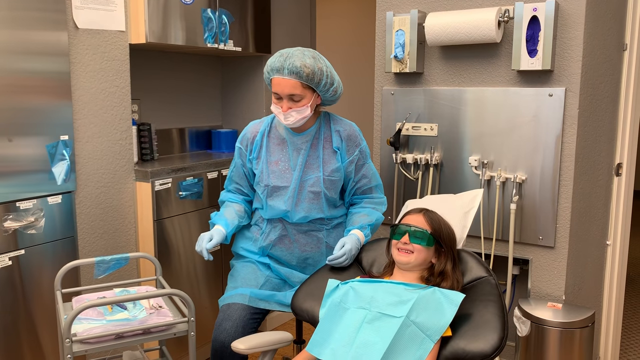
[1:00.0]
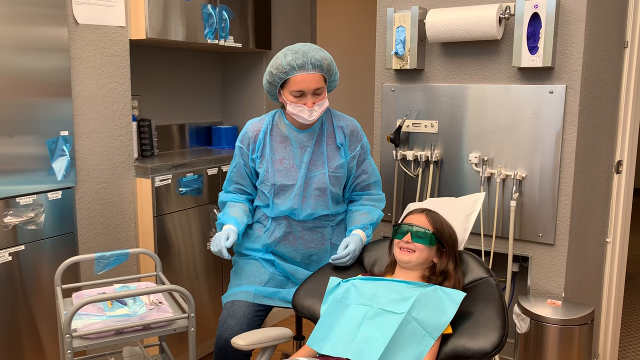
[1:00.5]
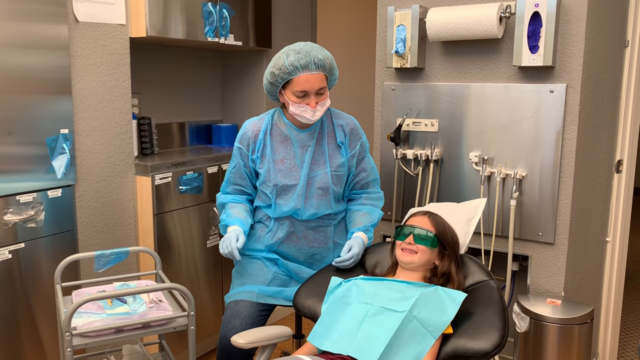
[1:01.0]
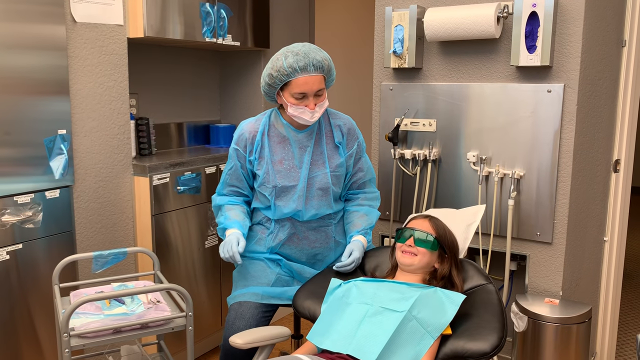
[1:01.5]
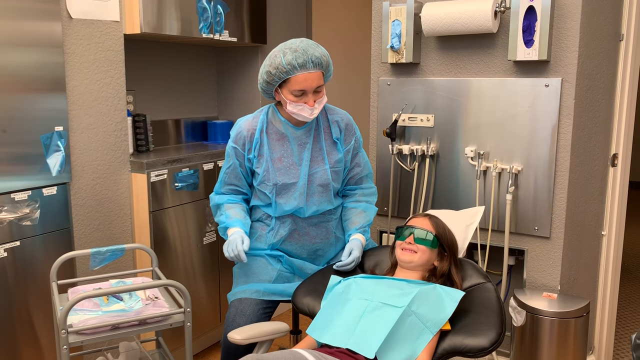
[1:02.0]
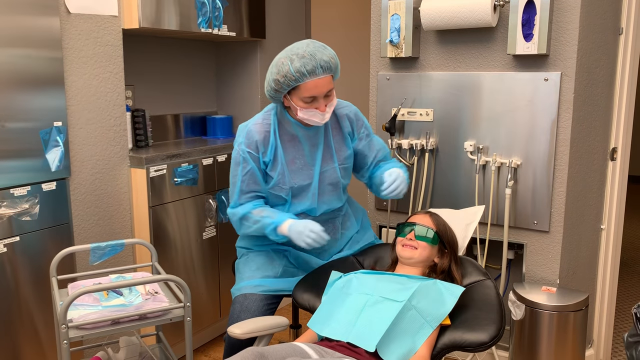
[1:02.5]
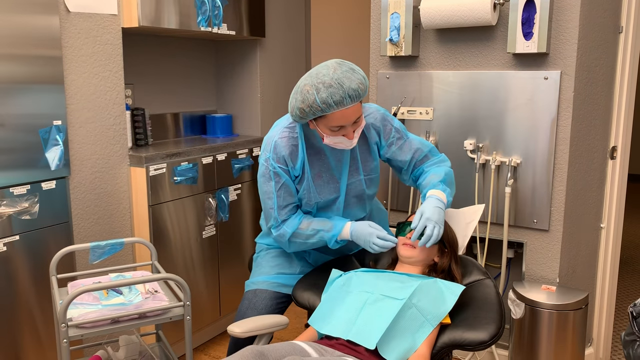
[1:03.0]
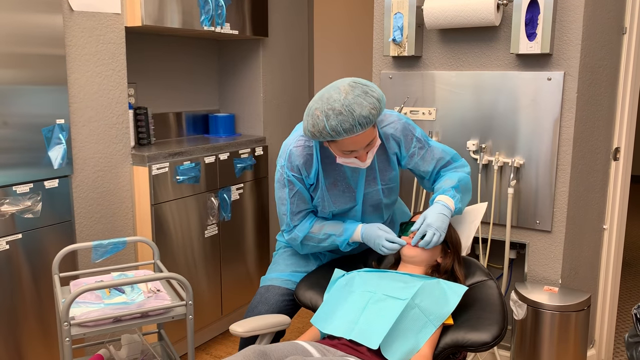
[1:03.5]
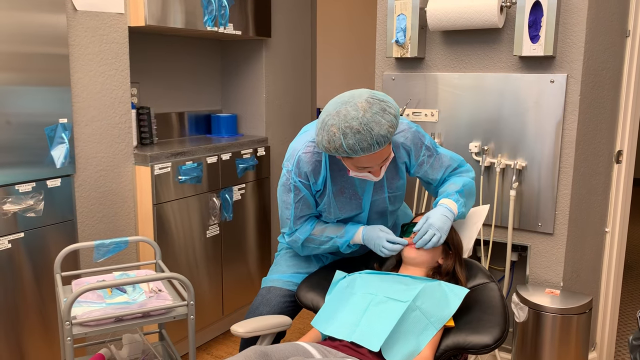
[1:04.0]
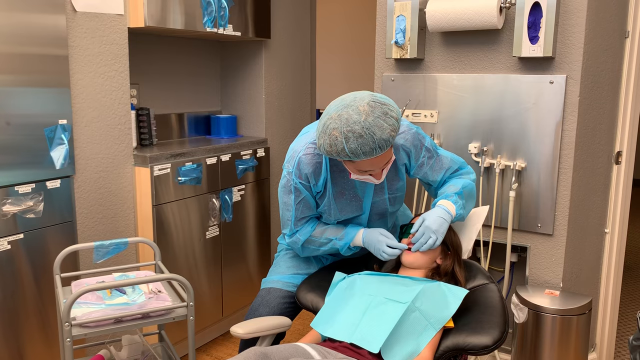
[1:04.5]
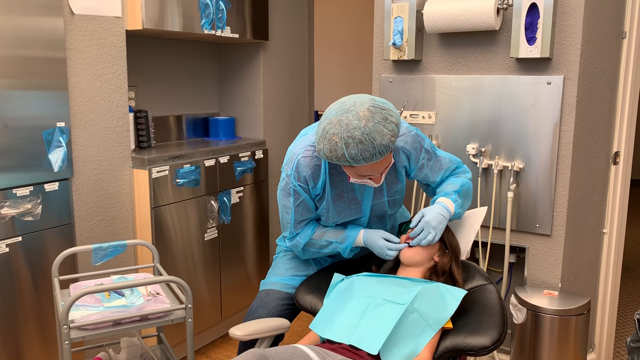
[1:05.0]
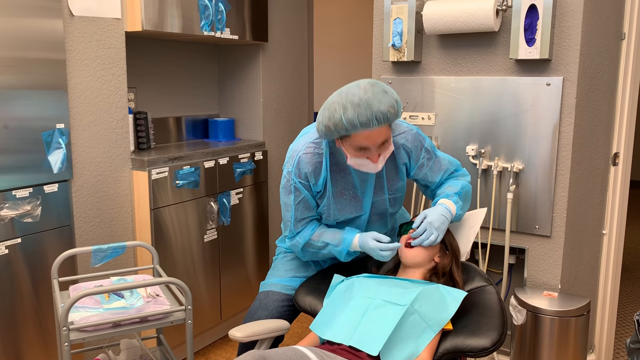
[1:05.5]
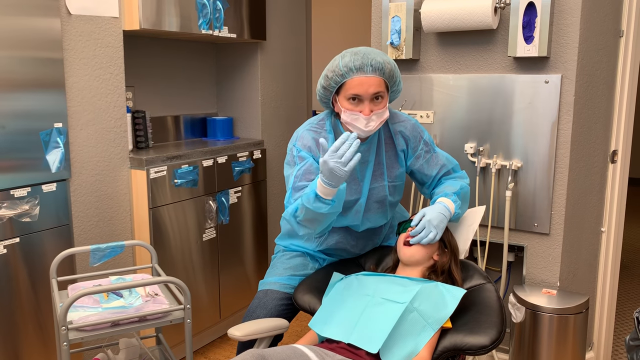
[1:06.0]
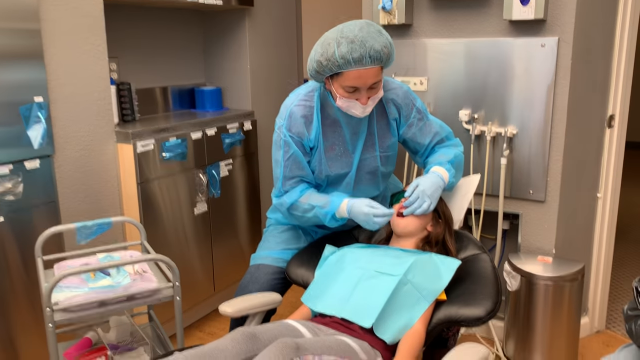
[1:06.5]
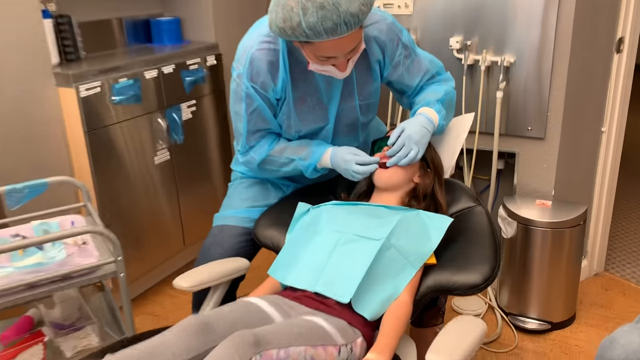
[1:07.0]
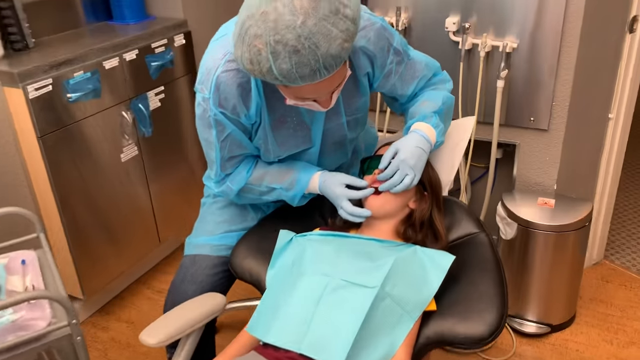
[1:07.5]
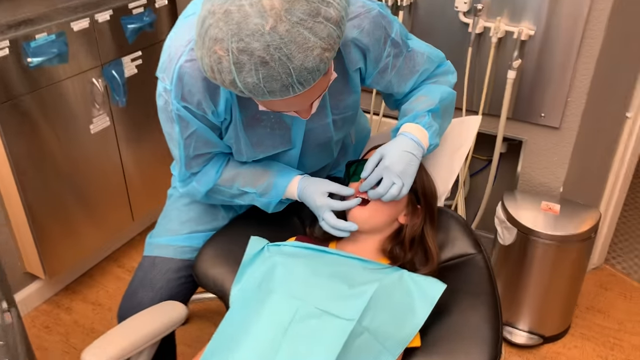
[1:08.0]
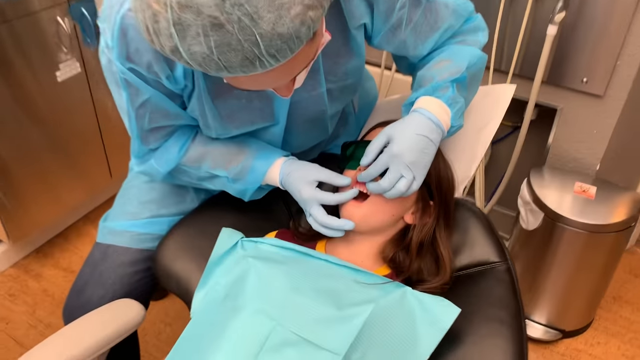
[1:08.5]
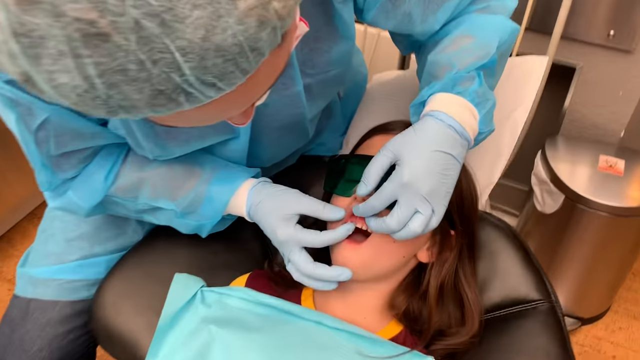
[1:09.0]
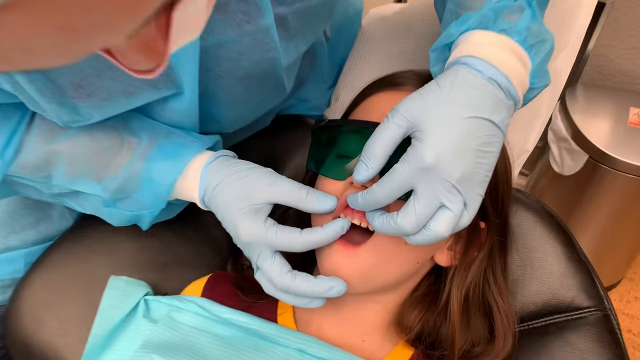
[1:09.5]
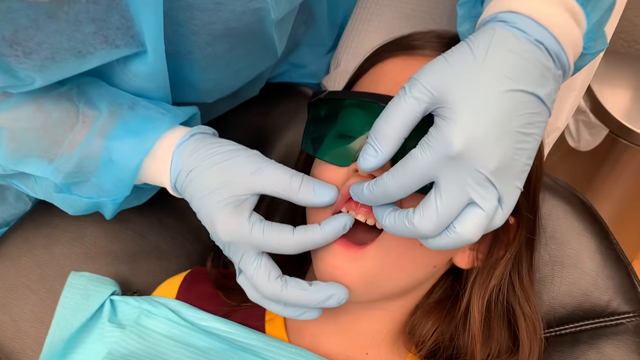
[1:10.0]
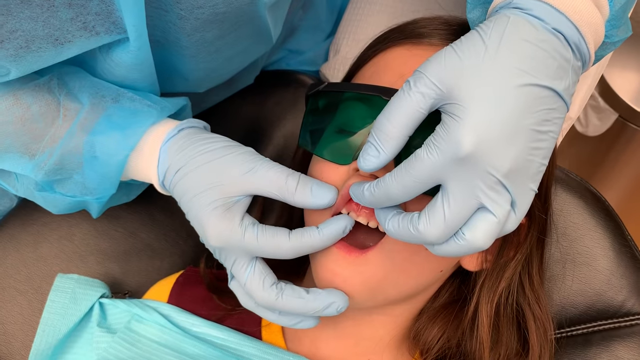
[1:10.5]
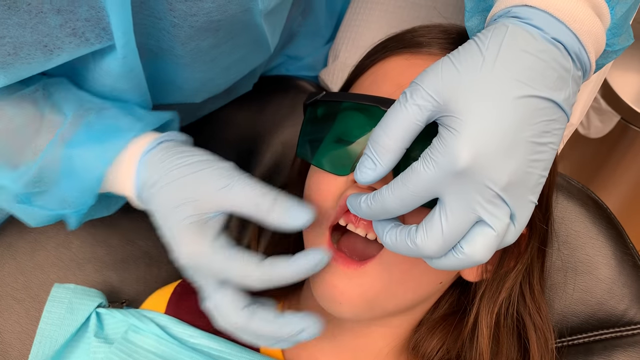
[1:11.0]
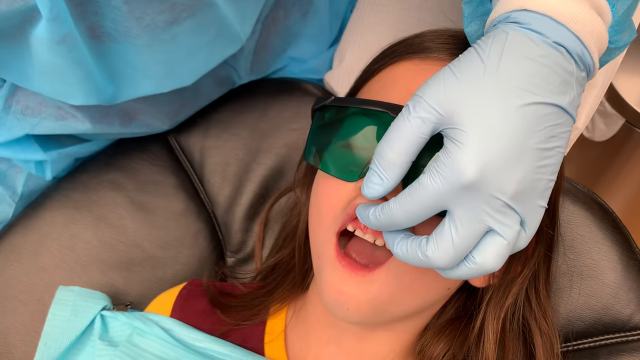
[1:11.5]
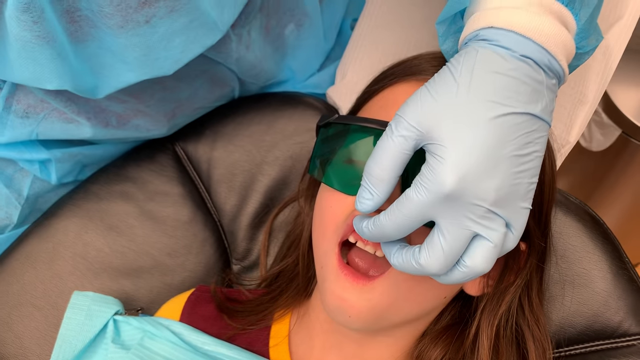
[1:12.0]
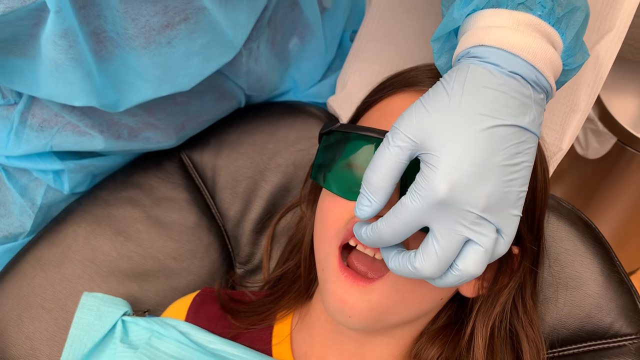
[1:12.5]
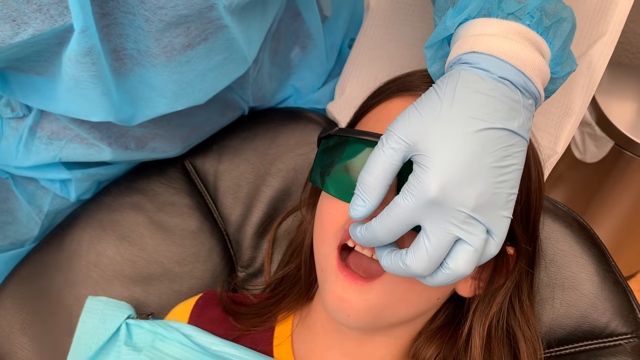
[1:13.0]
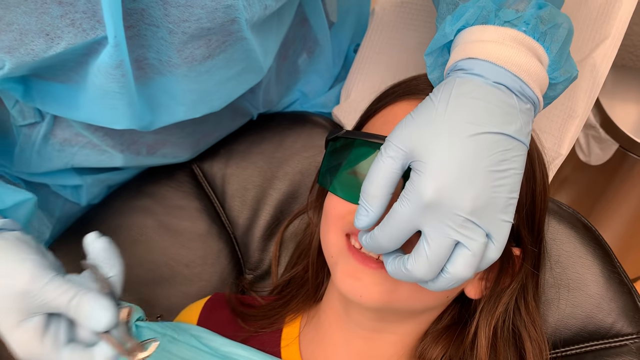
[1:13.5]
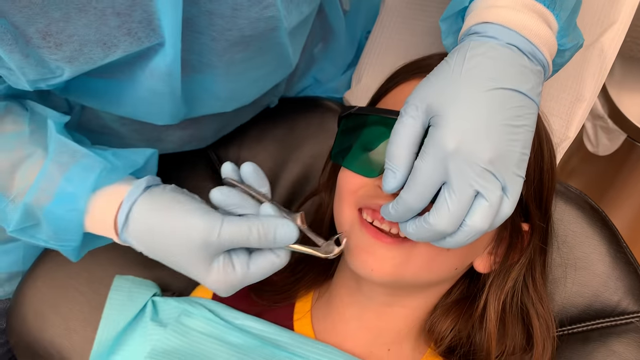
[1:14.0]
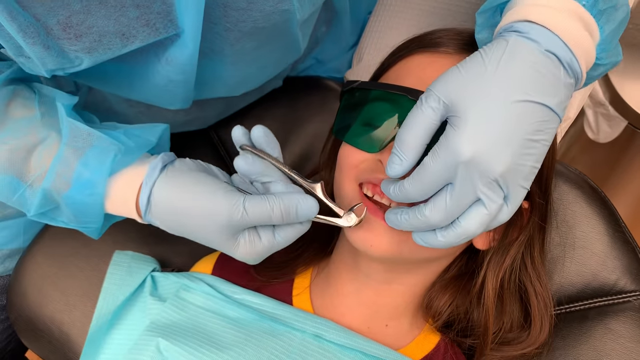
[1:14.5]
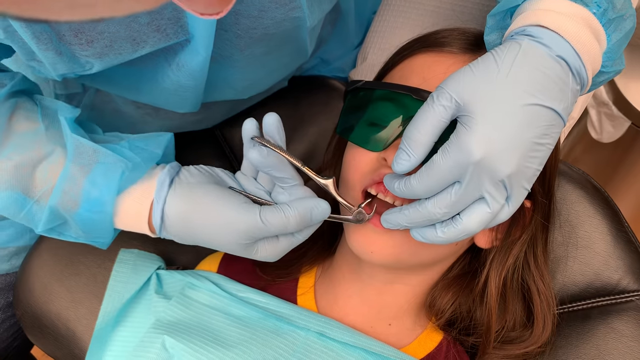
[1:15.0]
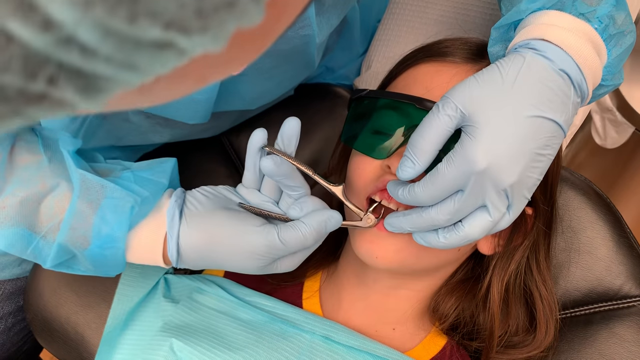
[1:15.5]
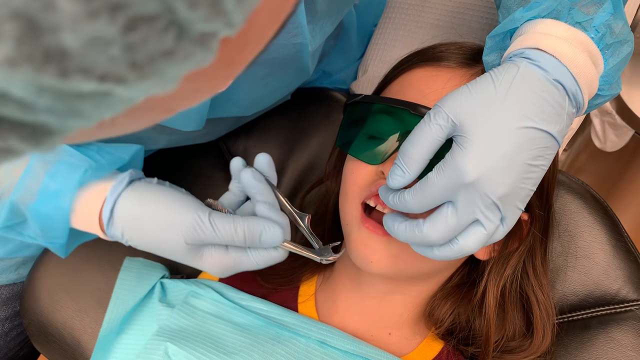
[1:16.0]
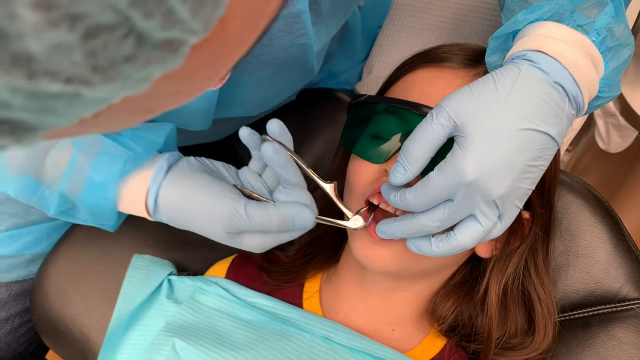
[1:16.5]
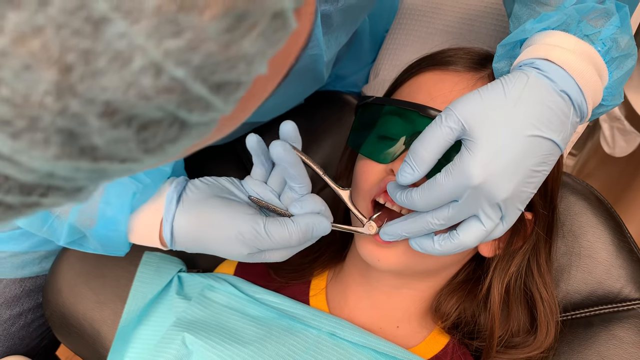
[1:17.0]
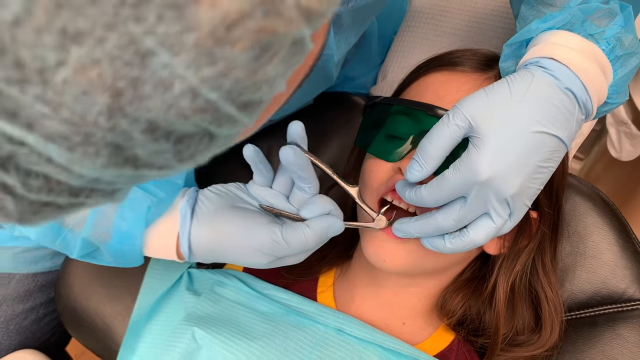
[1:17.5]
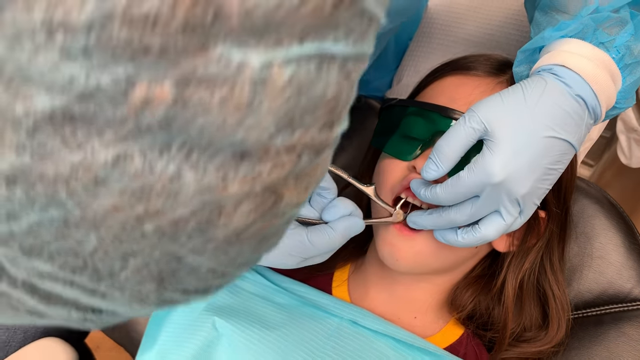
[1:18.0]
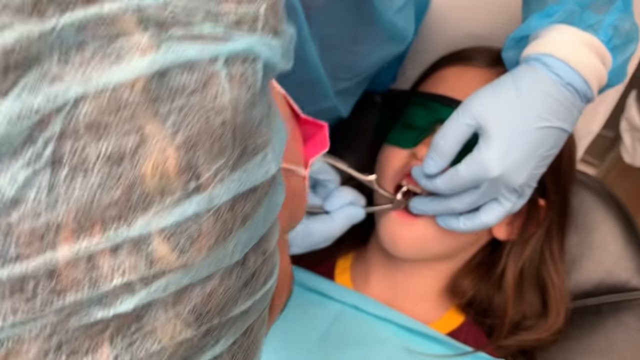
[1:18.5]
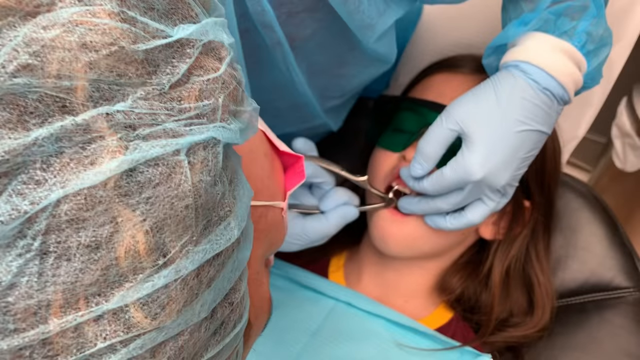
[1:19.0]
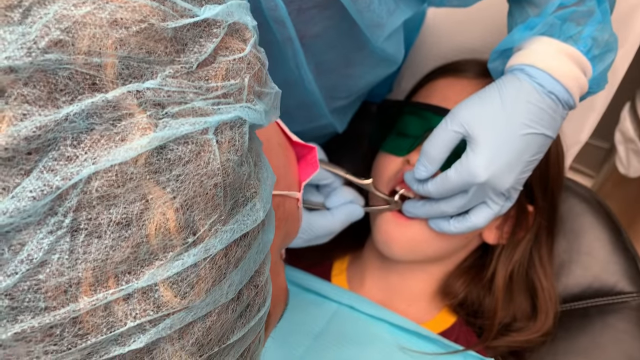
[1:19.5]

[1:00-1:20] The chair continues to recline backwards, and the dentist puts her hands in the little girl's mouth as the girl opens it. The camera zooms in on the girl's mouth as the dentist wiggles a loose baby tooth, the front tooth on the girl's right side, with her right index finger; the tooth can be seen moving. The dentist uses her left hand to keep the upper part of the girl's mouth open. With her right hand she grabs small silver pliers and positions them to take out the front baby tooth, and the camera slightly zooms out as she gets ready to remove it.